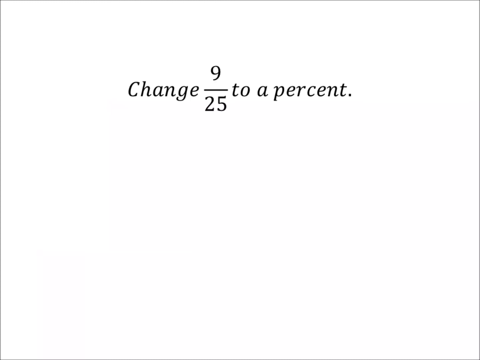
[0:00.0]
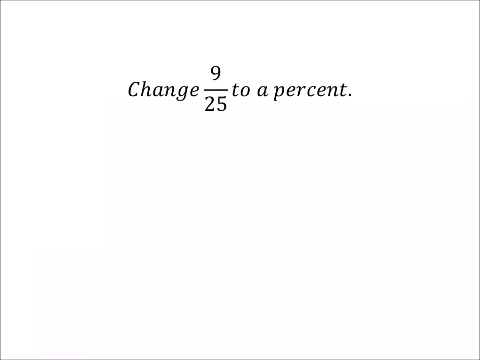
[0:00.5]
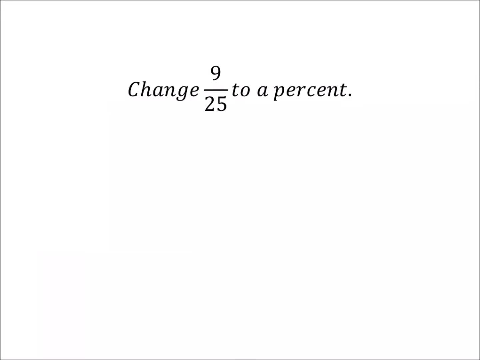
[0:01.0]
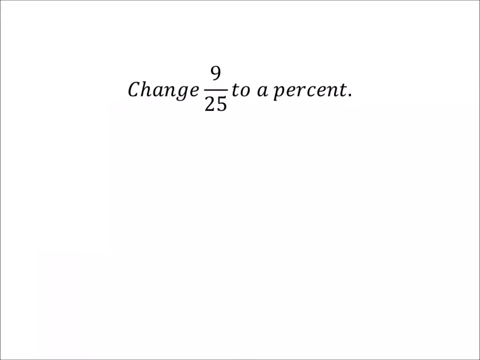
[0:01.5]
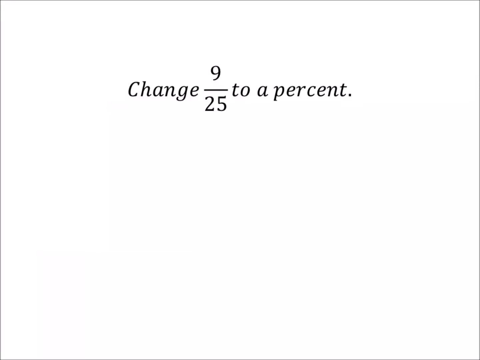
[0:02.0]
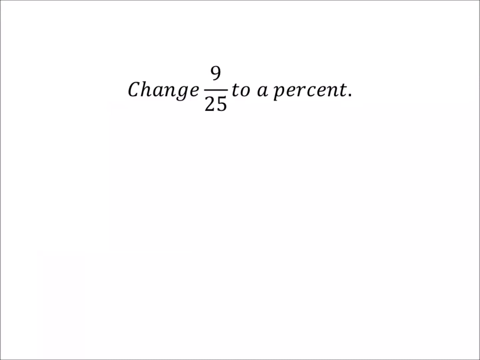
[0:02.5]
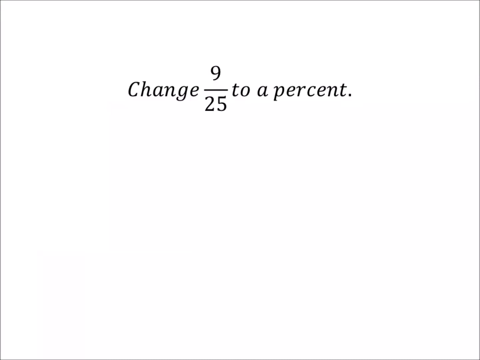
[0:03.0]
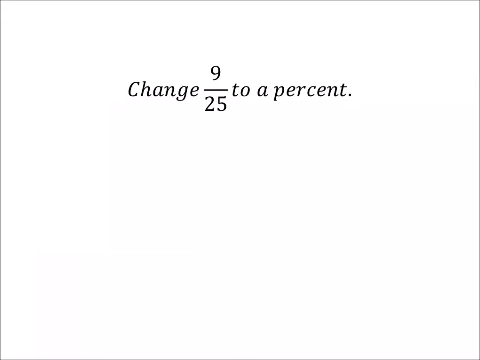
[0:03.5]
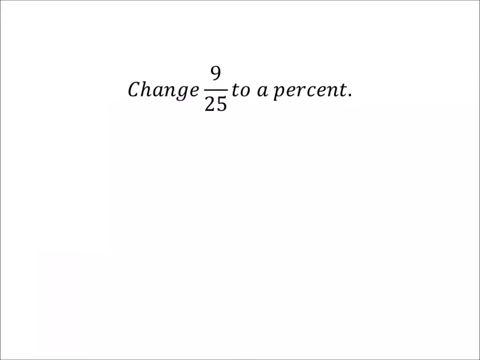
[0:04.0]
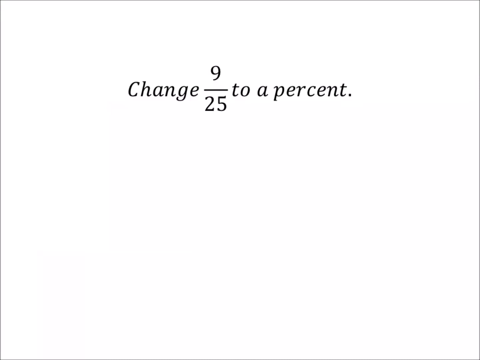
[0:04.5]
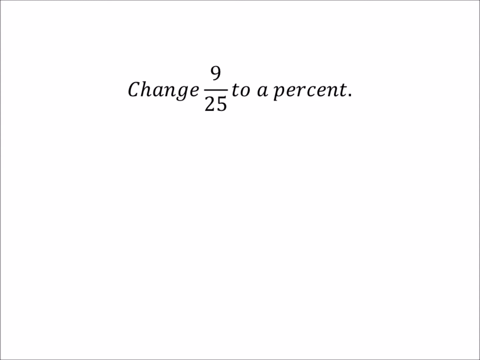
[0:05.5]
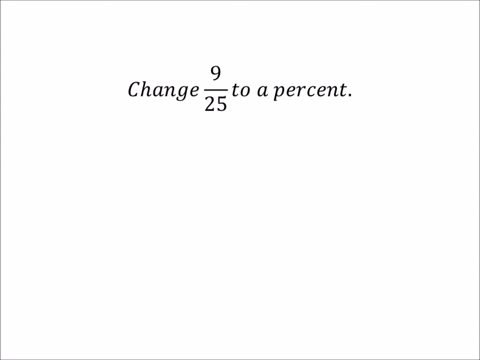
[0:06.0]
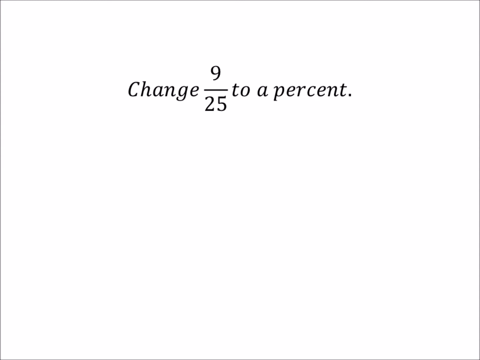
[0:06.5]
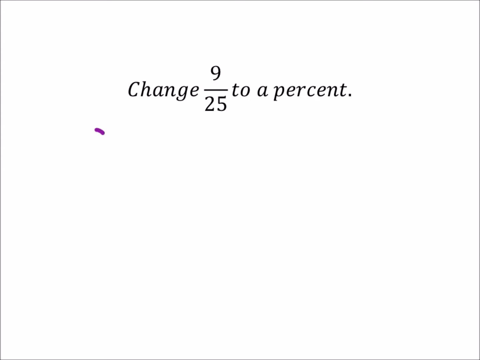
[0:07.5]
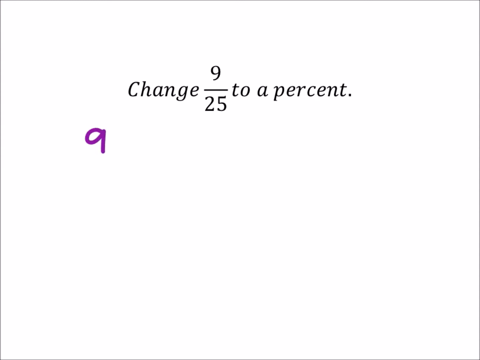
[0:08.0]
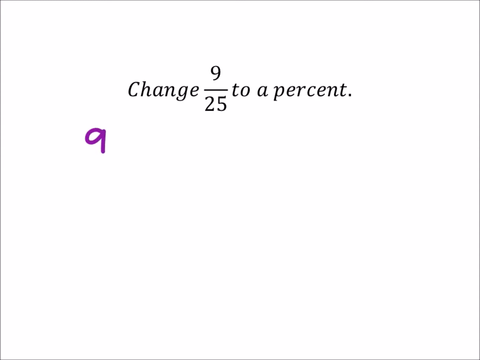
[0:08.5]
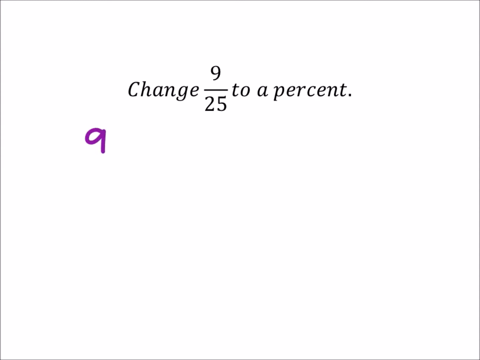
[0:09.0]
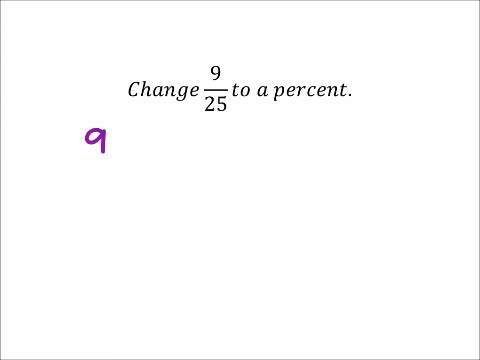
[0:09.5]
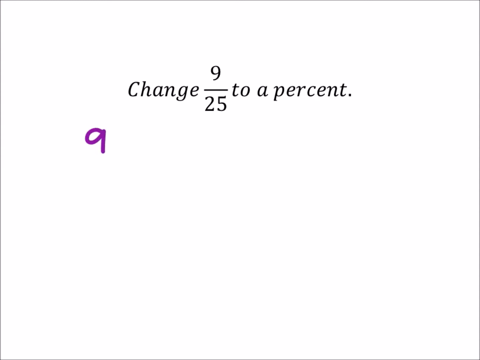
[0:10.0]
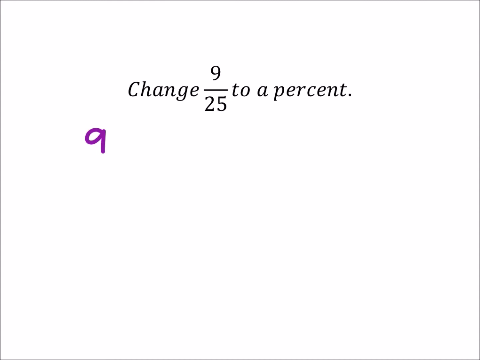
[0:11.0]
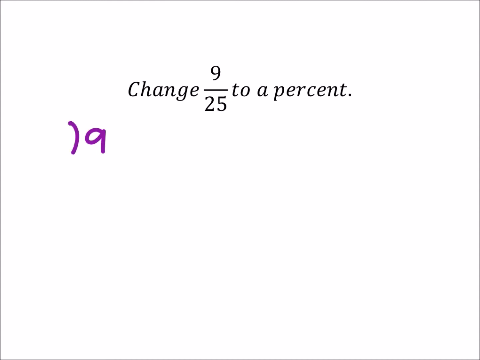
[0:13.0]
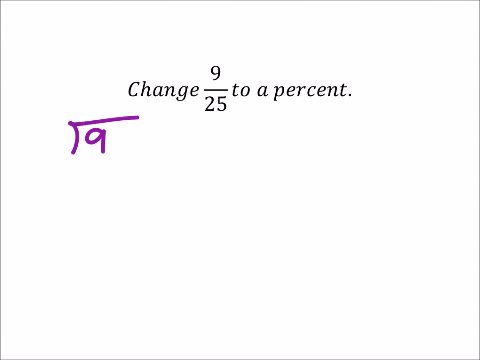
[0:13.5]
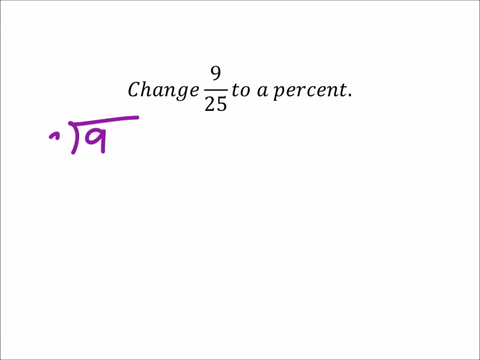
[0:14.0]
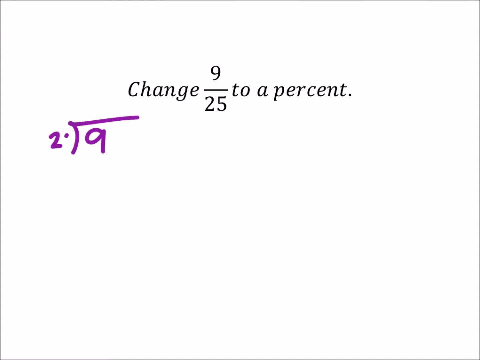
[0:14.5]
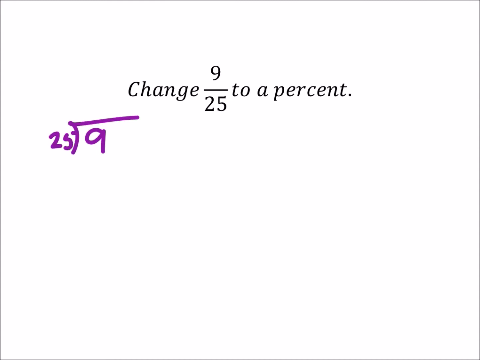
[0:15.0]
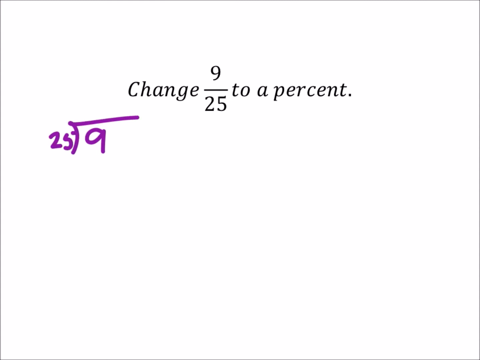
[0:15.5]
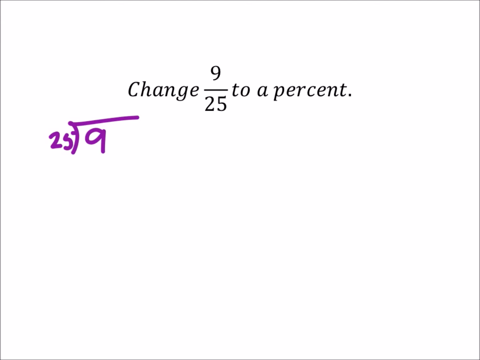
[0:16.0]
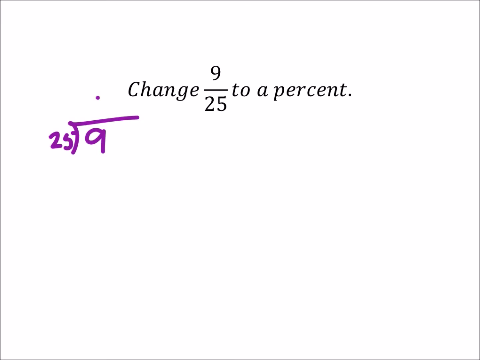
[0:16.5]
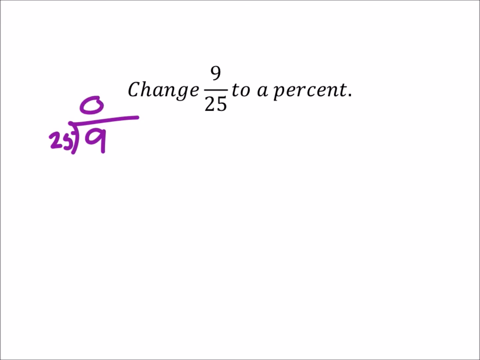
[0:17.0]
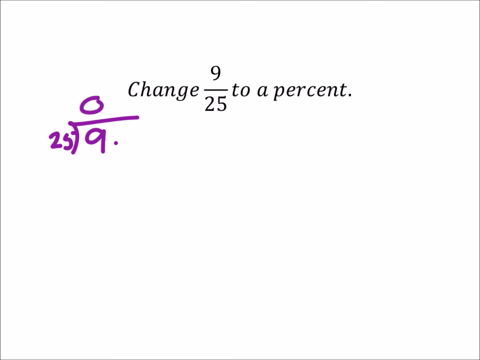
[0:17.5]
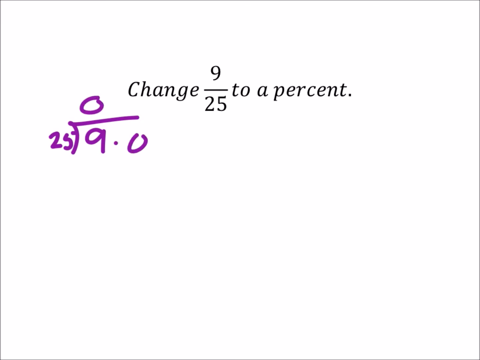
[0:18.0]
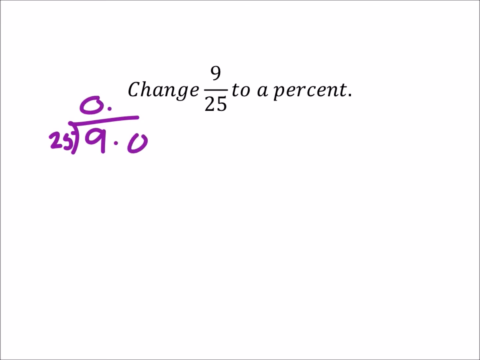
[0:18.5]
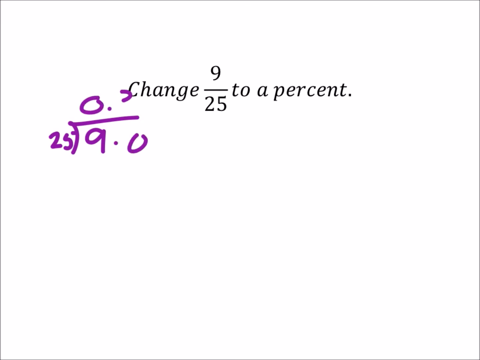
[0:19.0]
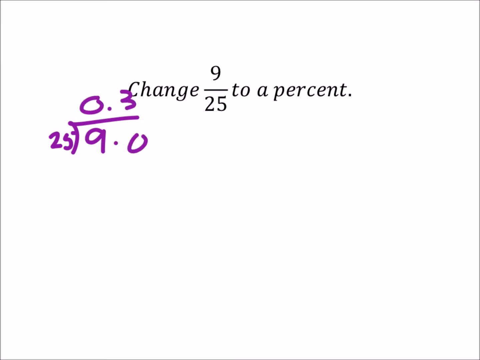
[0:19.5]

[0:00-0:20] The video opens on a static white background with simple black italic text at the top reading "change 9 over 25 to a percent". It stays motionless for about 10 seconds. A purple number 9 then appears toward the top left, below the italic text, added in a cursive, handwritten style as if someone is writing on the screen with a stylus. A number 25 and a long division symbol are added, so the figures read 25 long division 9.0, and a 0.3 is written on top. The purple cursive figures are placed in the middle left of the screen, below the black text. Finally, a 7 is added just below the 9. The screen stays static, with no movement other than the purple cursive figures being added.